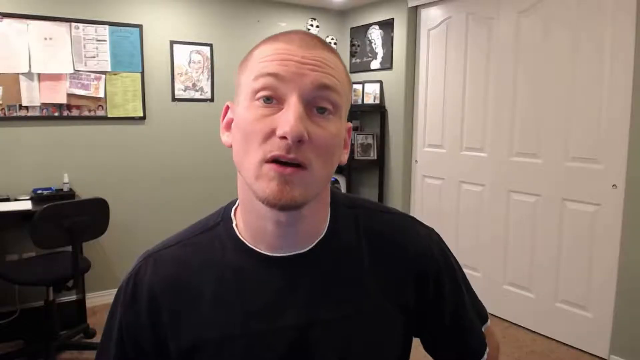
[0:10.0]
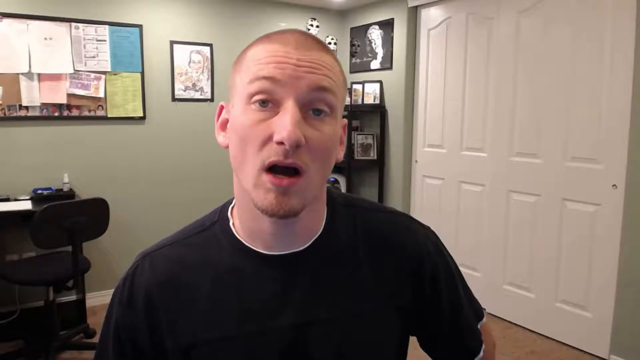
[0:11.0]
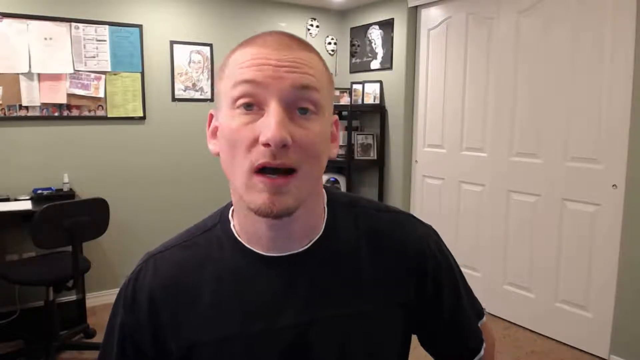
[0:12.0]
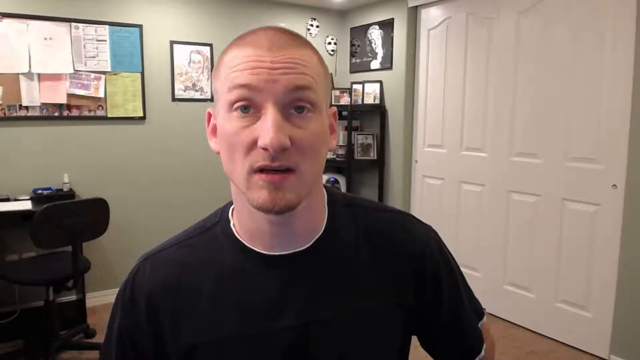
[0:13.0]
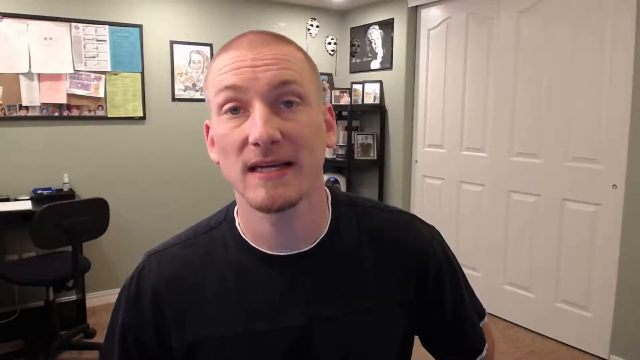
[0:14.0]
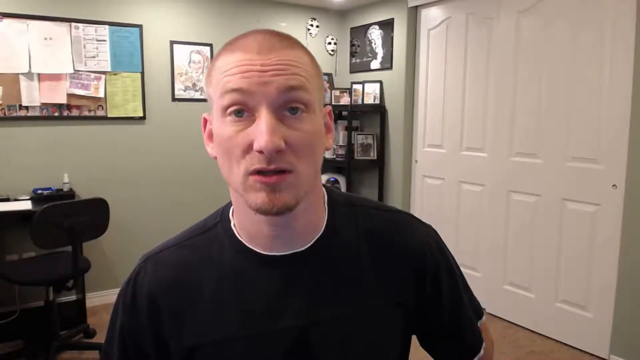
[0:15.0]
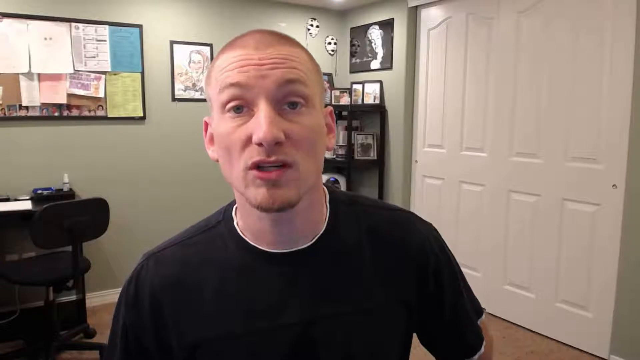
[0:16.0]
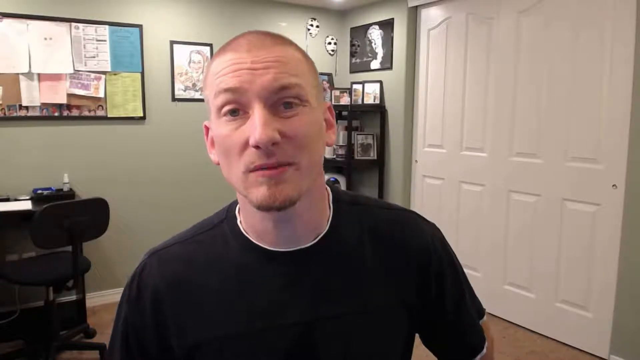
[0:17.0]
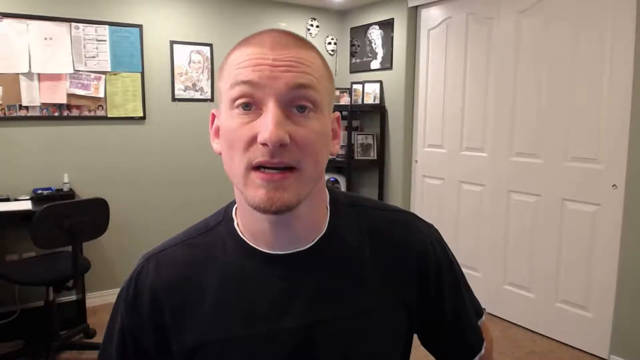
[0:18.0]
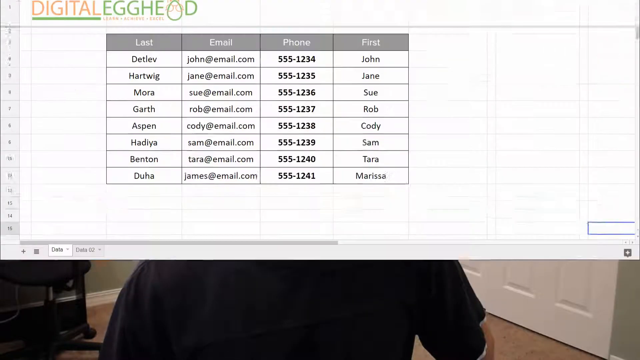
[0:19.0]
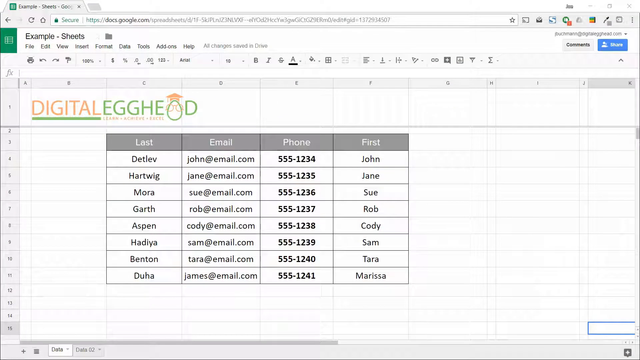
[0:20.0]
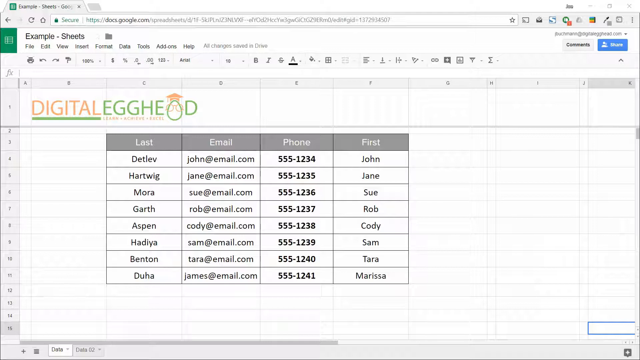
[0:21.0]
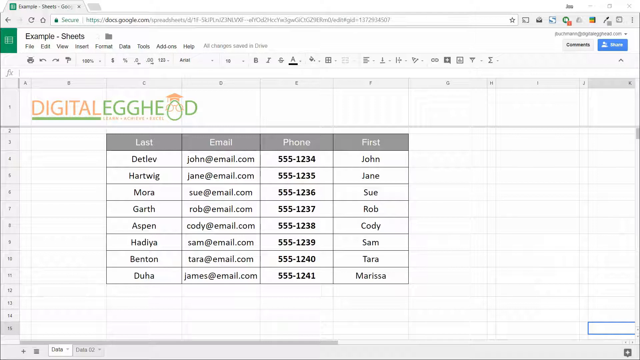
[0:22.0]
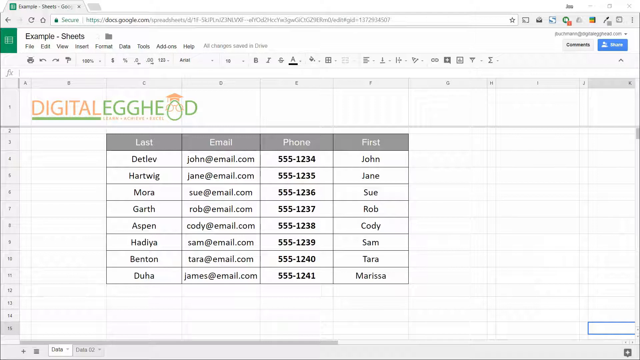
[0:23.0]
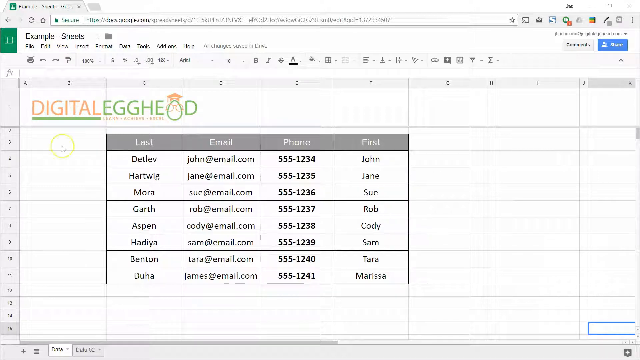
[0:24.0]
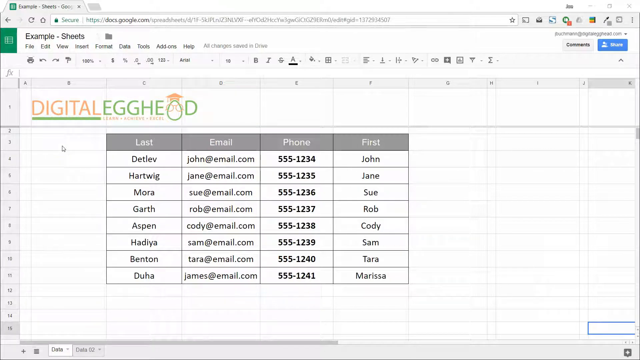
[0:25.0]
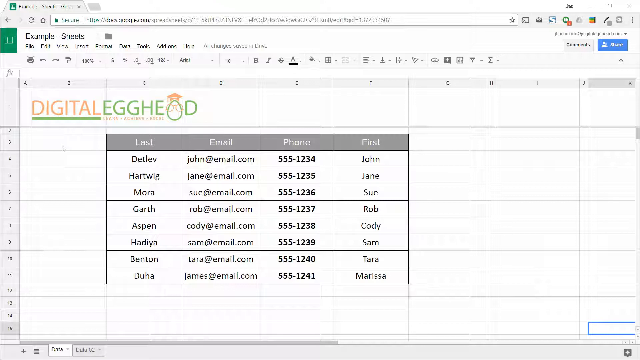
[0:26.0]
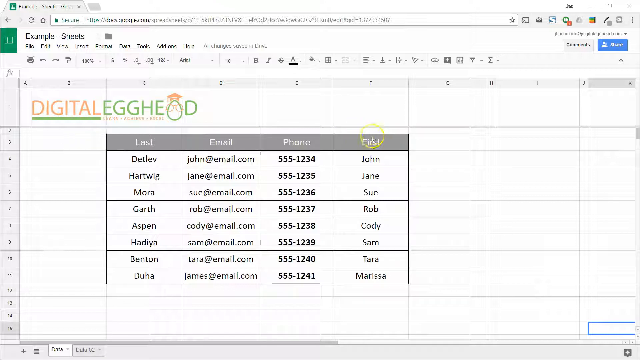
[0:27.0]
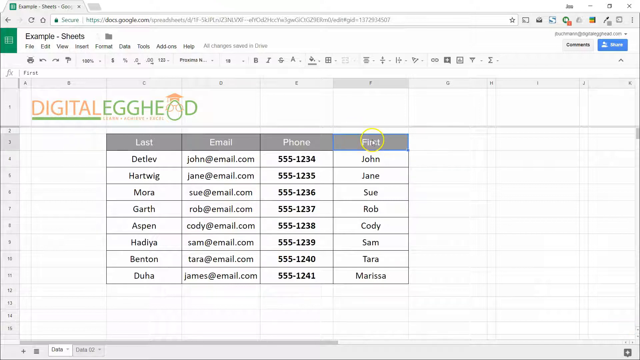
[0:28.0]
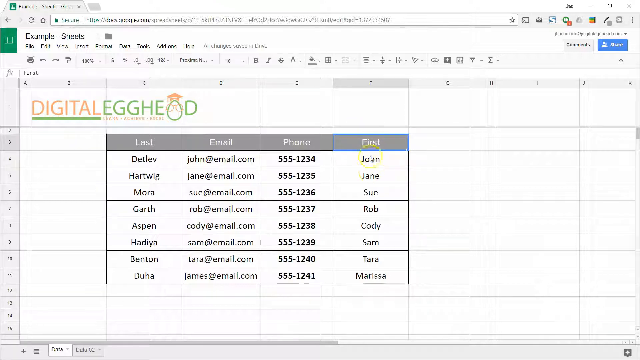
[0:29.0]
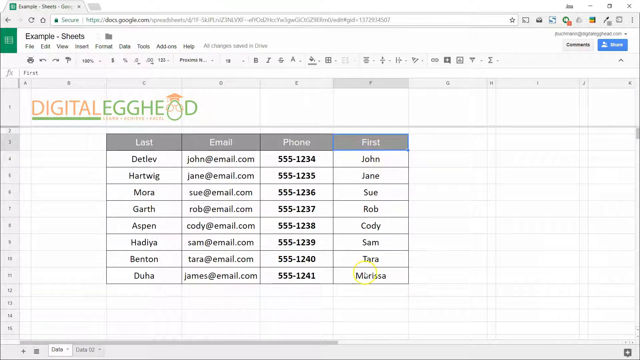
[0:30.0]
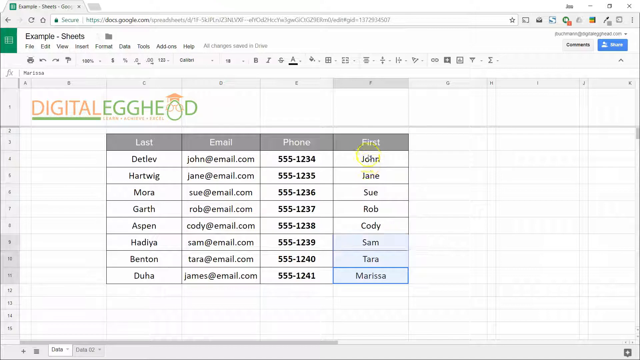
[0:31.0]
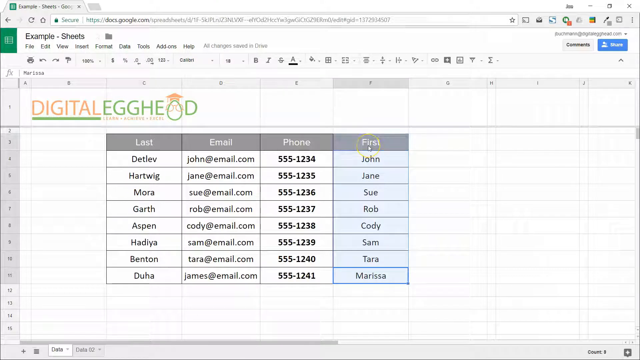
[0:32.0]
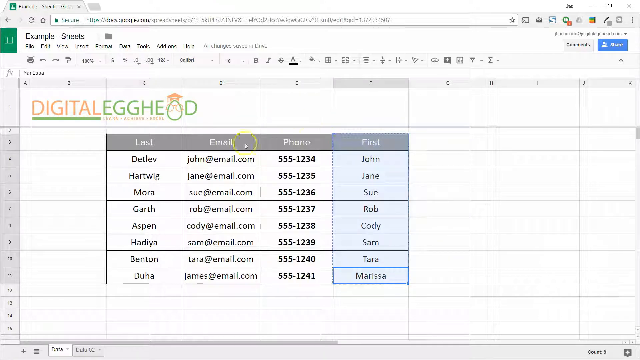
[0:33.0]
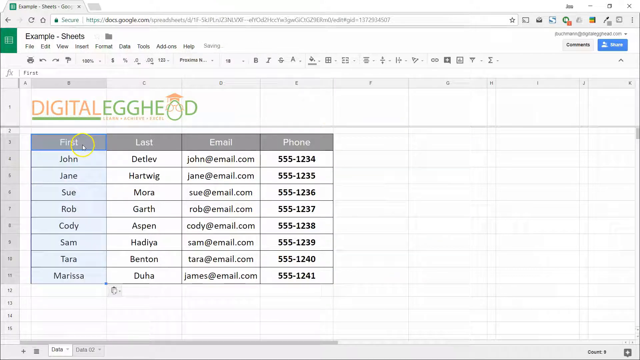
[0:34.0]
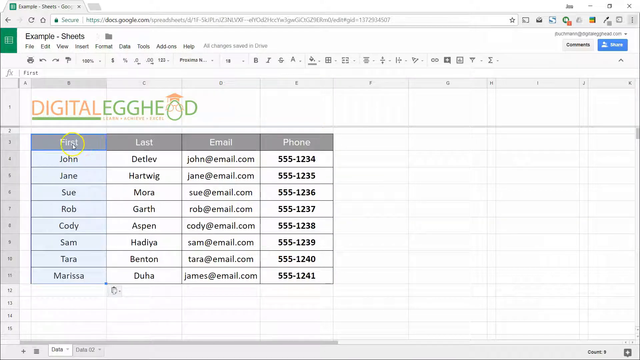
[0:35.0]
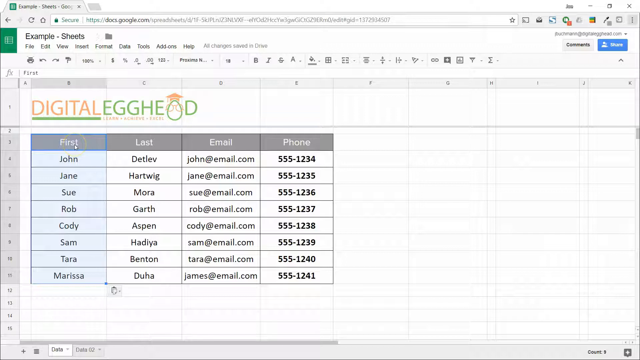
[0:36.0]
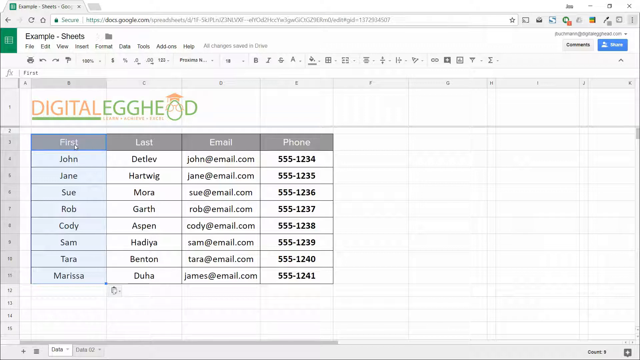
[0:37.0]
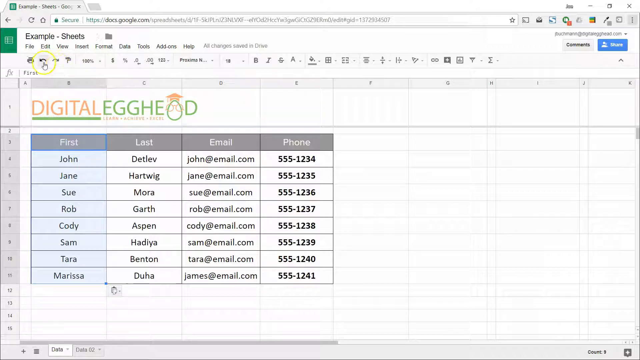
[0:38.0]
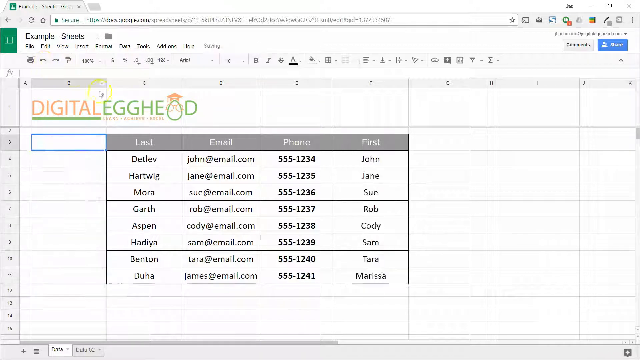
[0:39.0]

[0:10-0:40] A man wearing a black shirt sits in a light green room with doors directly behind him, pictures on the wall, and a stand. He talks directly into the camera, moving his head slightly as he speaks. The video then cuts to what looks to be someone sharing a computer screen. At the top it says "example sheets," and below that, on the typing area, it says "Digital Egghead." Below that is a chart with sections labeled "Last," "email," "phone" and "first," each with information directly below it. Someone clicks on different areas of the chart, moves the chart into different areas and changes some of the information.